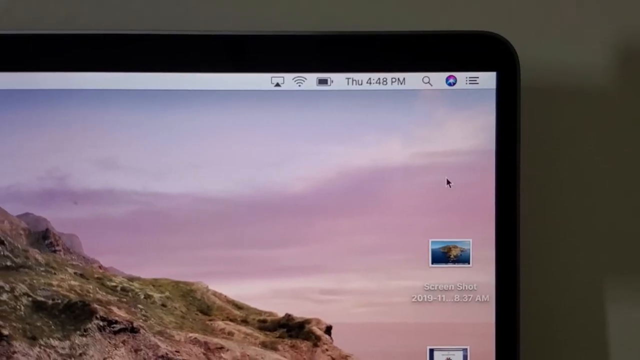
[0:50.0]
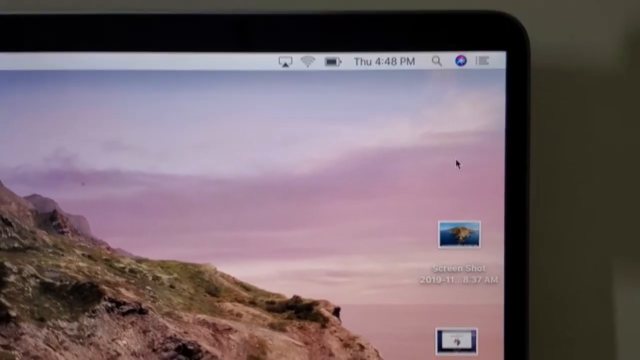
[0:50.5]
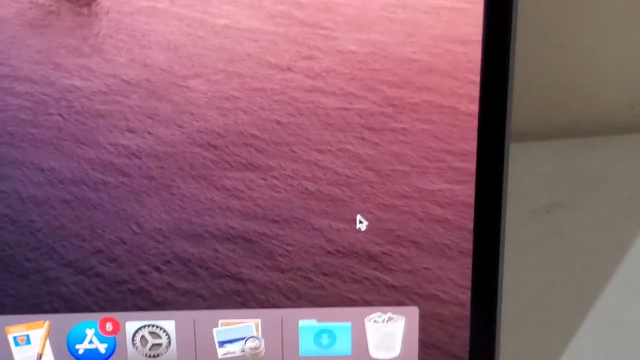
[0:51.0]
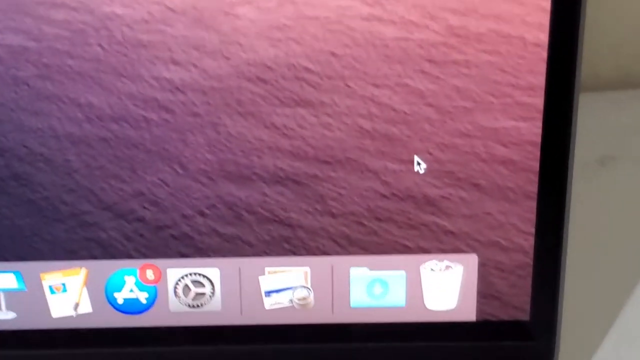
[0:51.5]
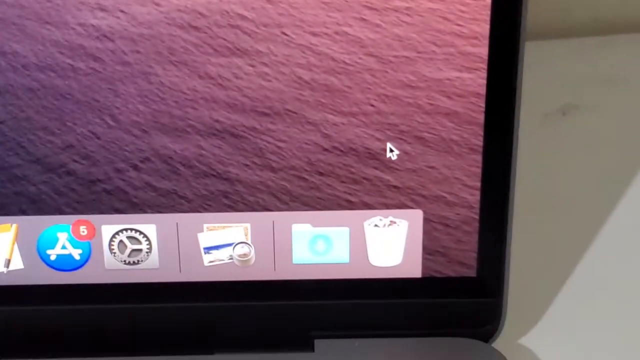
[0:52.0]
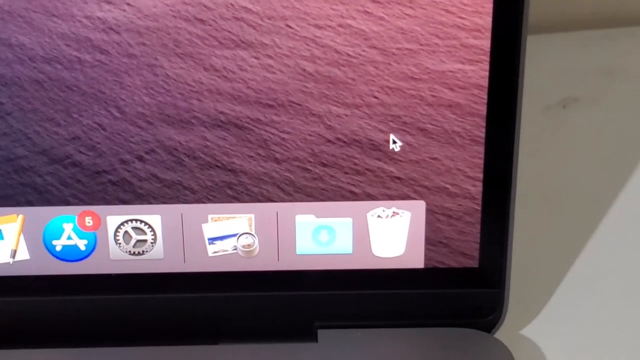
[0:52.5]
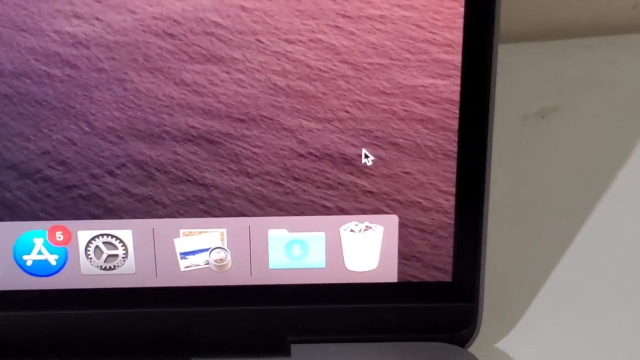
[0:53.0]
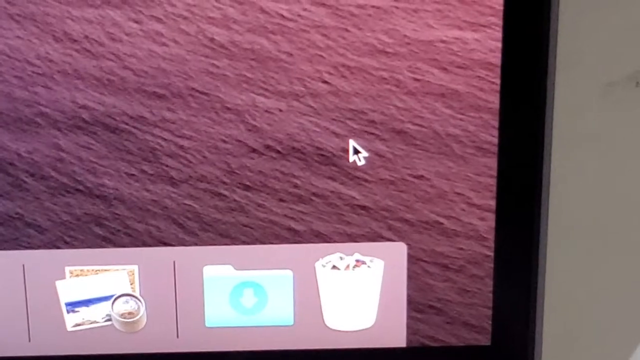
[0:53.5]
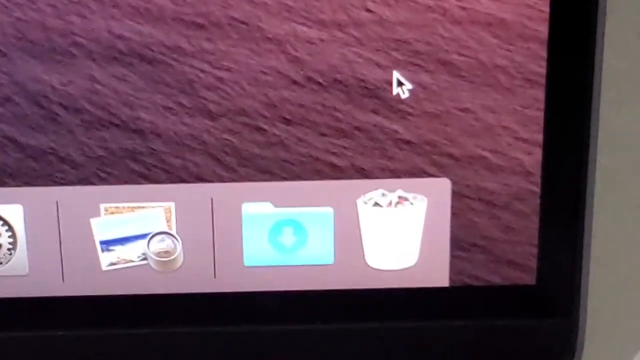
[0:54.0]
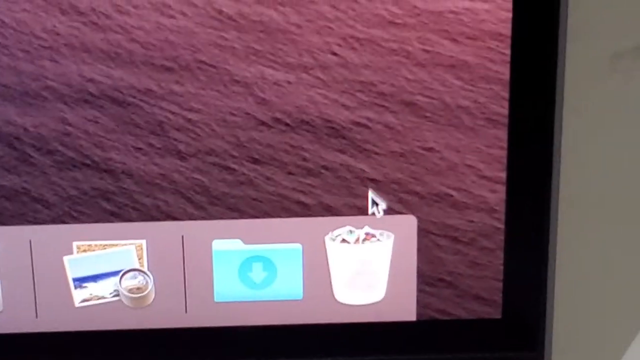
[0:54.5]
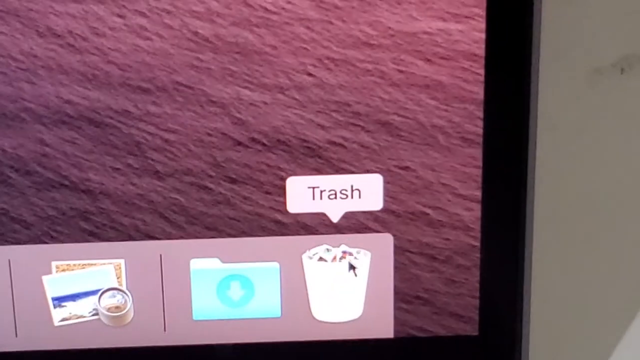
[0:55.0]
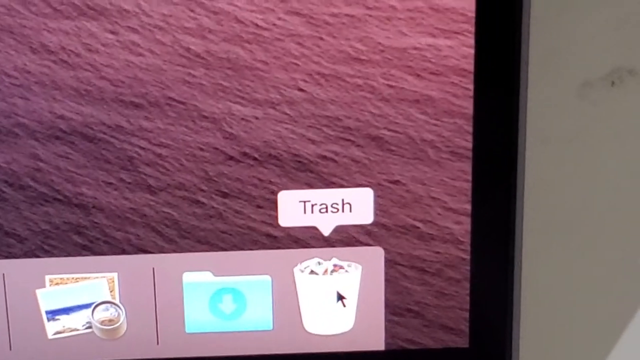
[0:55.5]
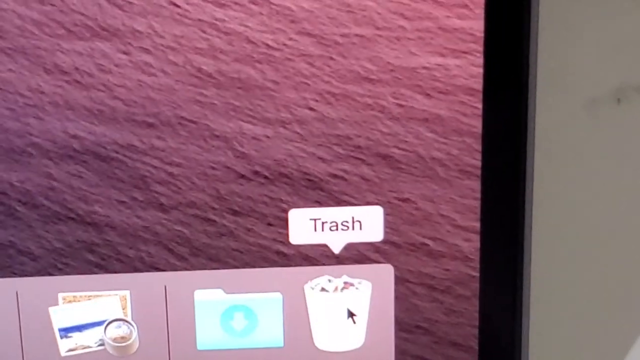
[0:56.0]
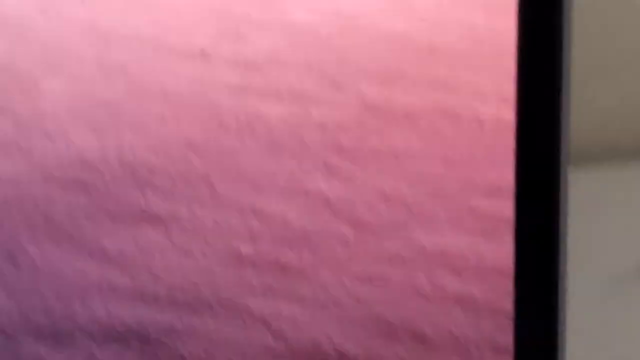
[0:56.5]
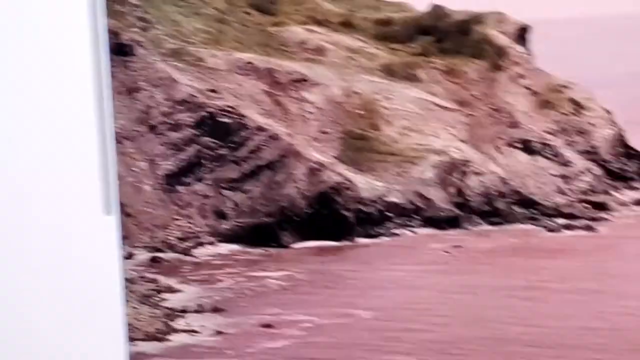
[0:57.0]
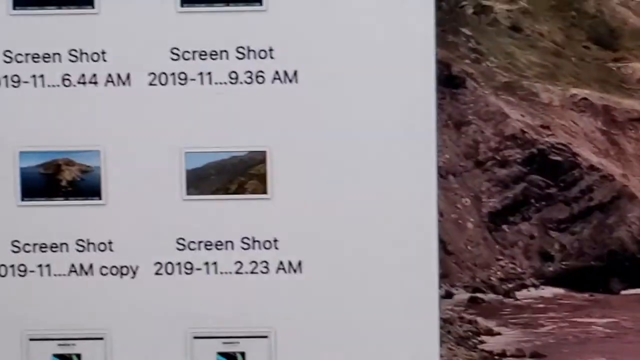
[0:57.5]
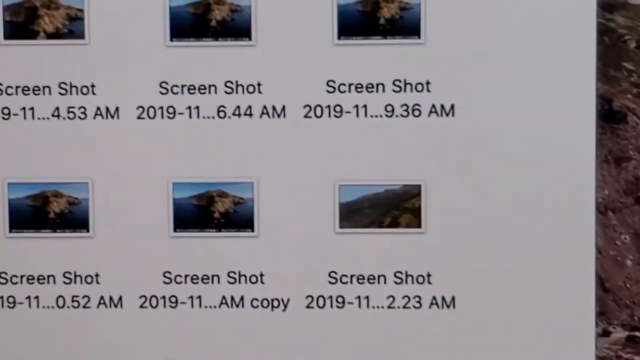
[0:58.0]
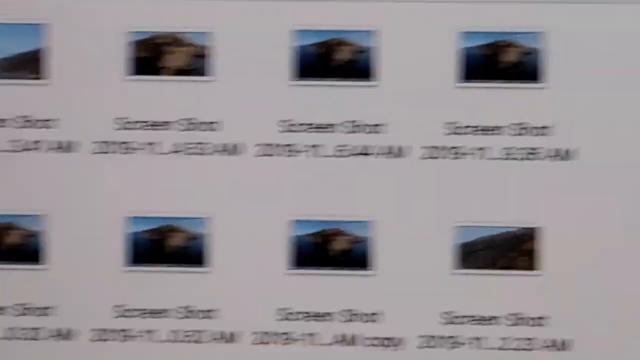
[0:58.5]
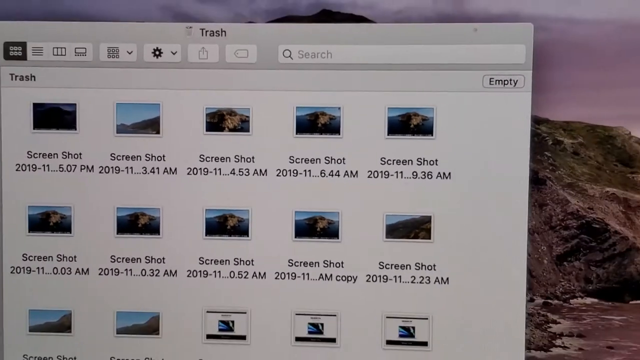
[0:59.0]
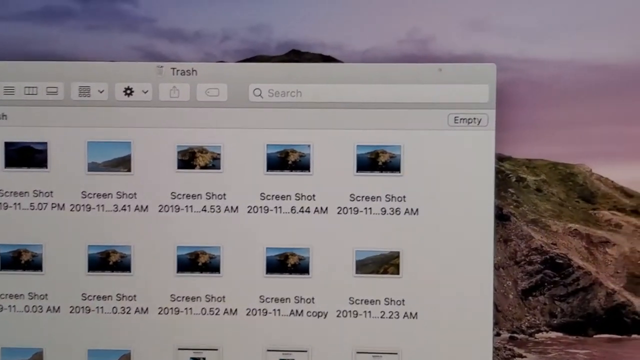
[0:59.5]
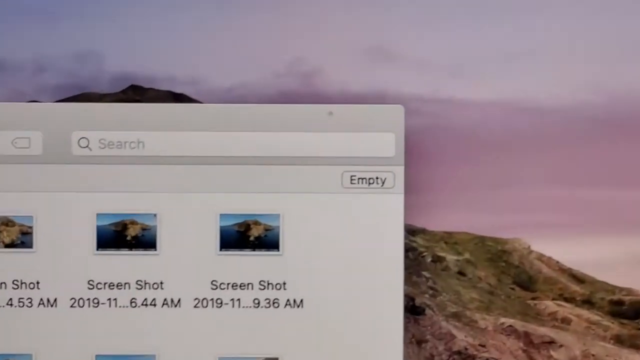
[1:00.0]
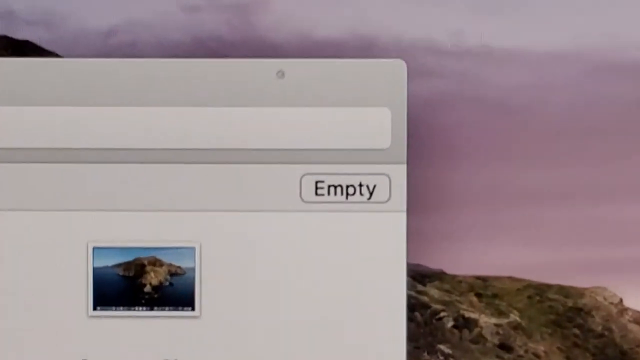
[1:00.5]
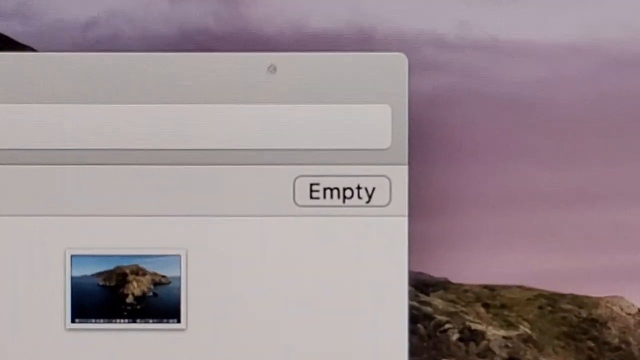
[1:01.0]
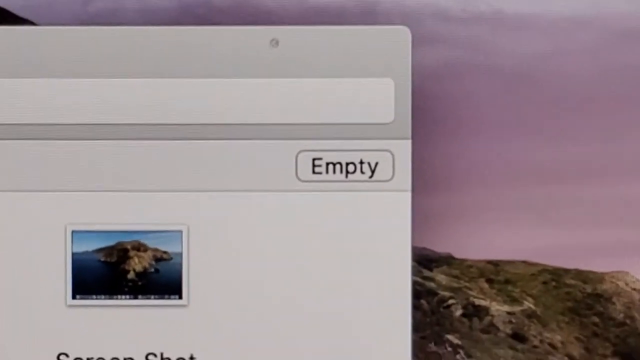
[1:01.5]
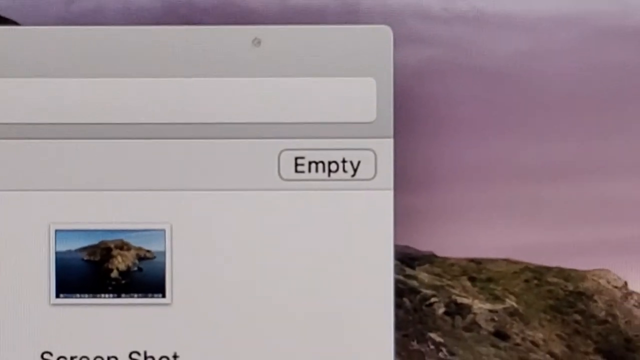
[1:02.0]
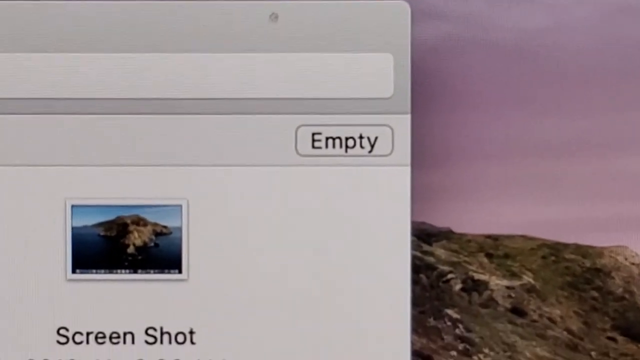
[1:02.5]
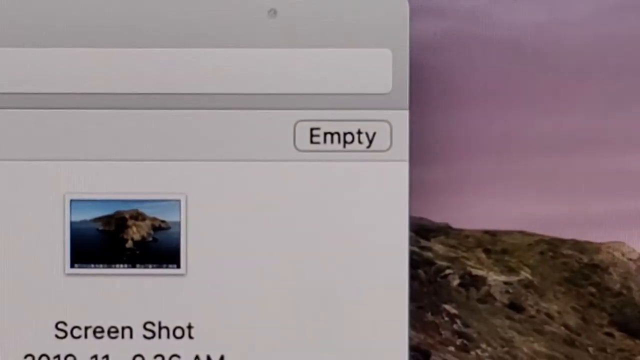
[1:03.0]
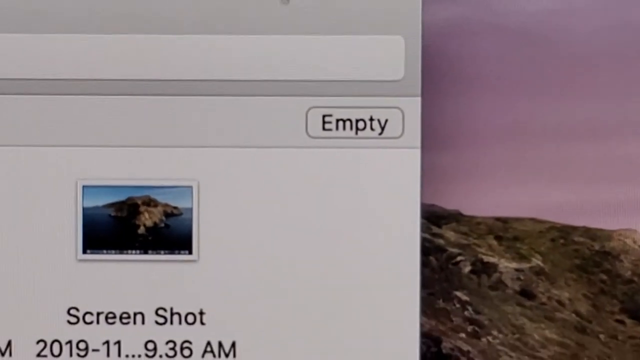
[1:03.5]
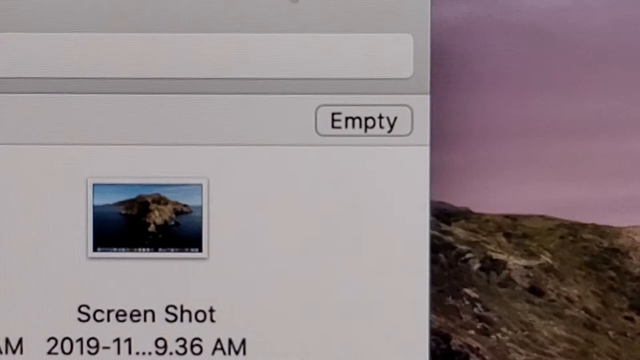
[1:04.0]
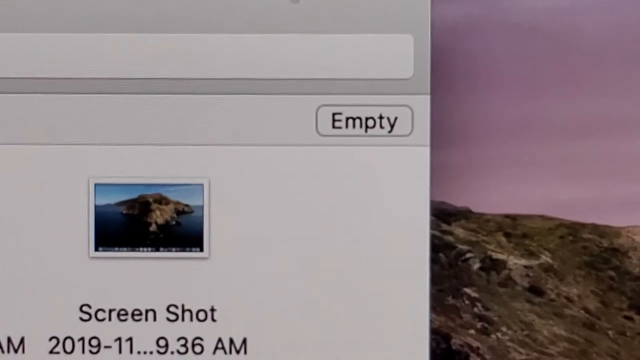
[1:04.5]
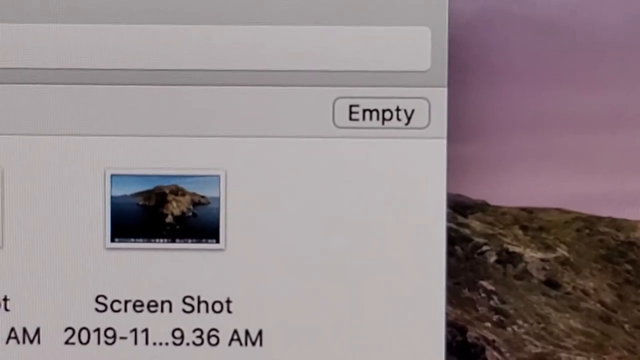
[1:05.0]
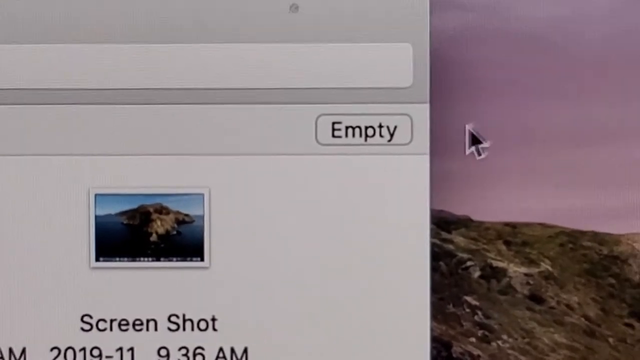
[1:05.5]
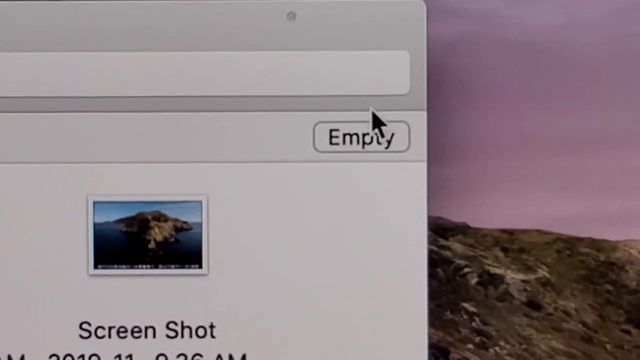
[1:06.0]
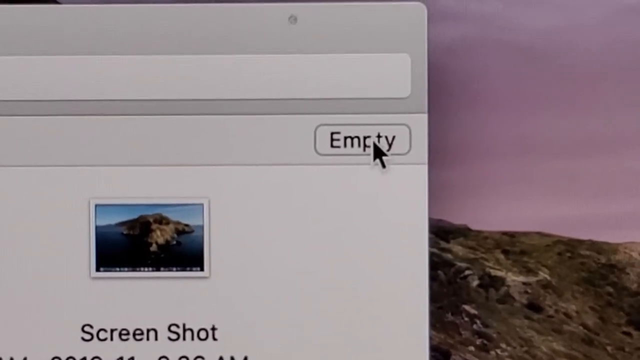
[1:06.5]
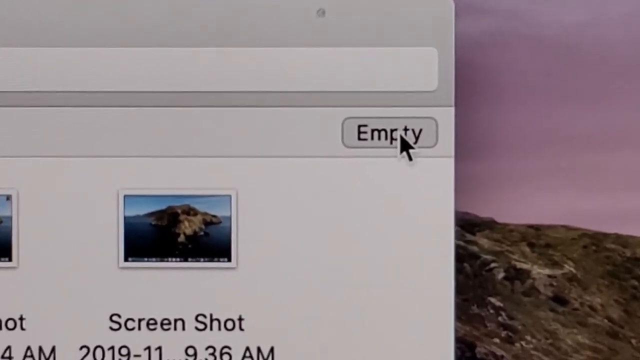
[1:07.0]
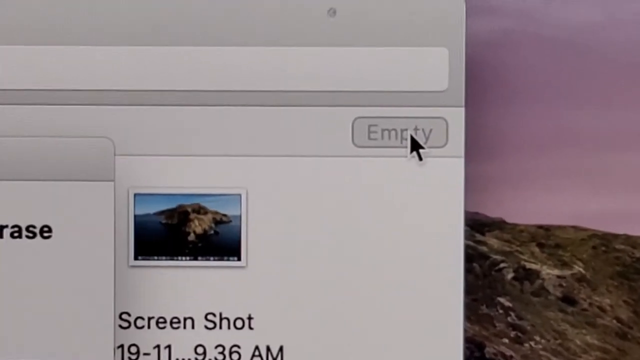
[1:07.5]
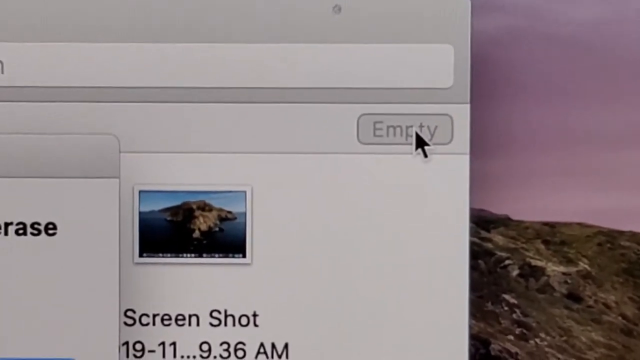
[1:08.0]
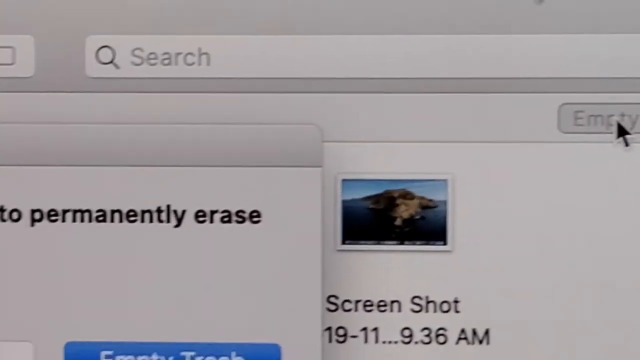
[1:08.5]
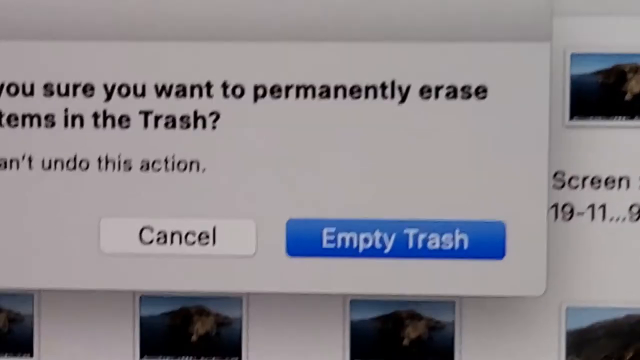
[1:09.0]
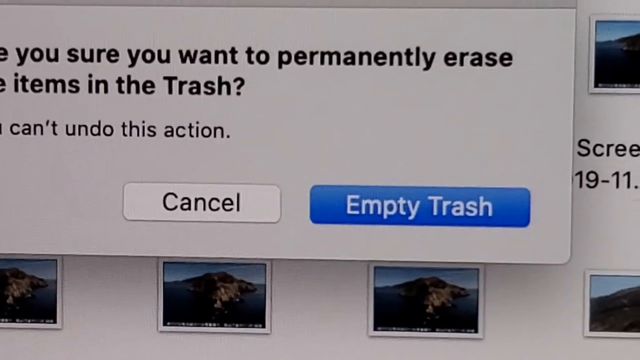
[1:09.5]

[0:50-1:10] The user clicks on the trash can, which opens to show the files in it, and the view zooms in to the word "empty". The user clicks on it and a new prompt appears: "are you sure you want to permanently erase items in this trash? You can't undo this action." It offers "cancel" and "empty trash", the latter in white font on a blue background. The trash folder has a search bar at the top, the label "trash", settings, a share button and display options, and there are about 15 items in the trash.